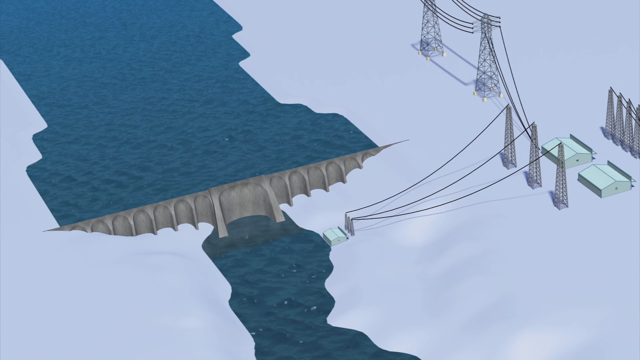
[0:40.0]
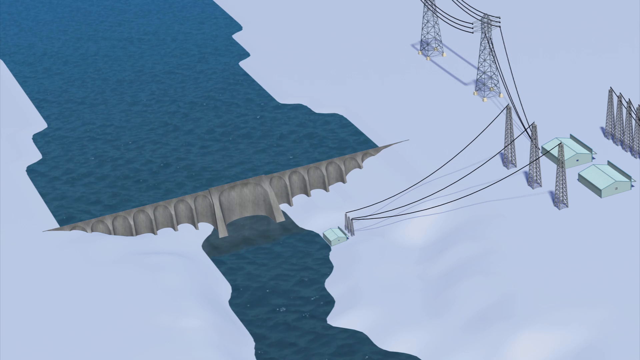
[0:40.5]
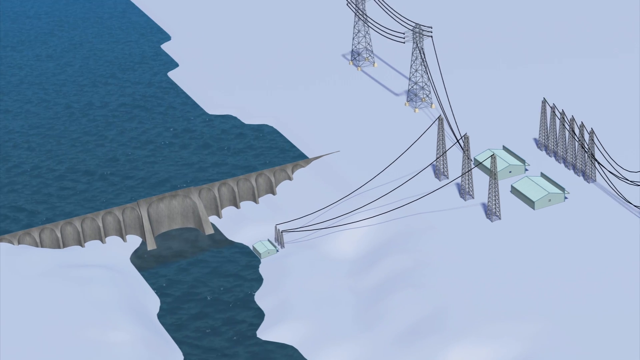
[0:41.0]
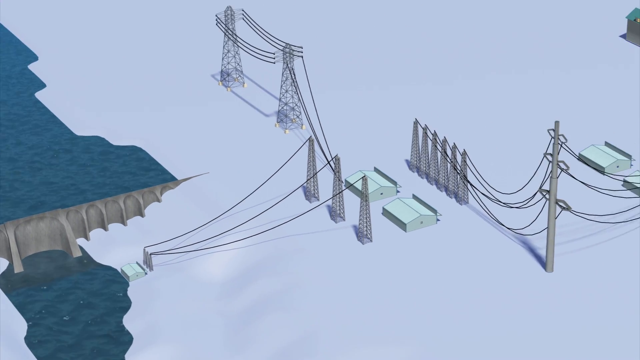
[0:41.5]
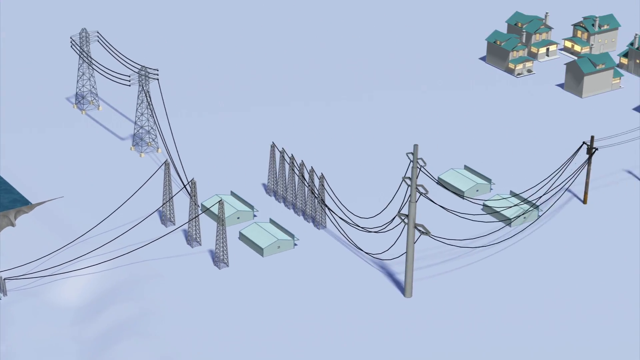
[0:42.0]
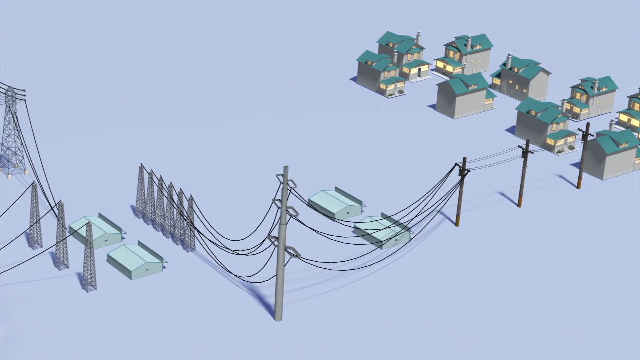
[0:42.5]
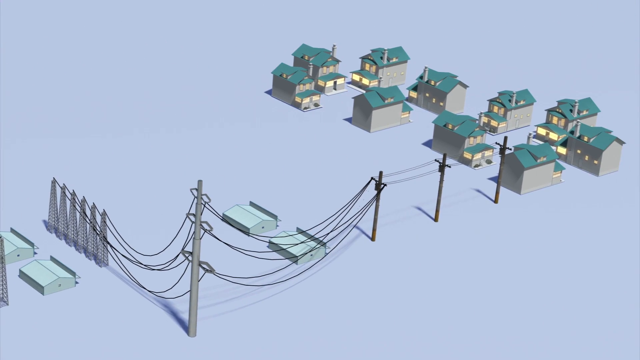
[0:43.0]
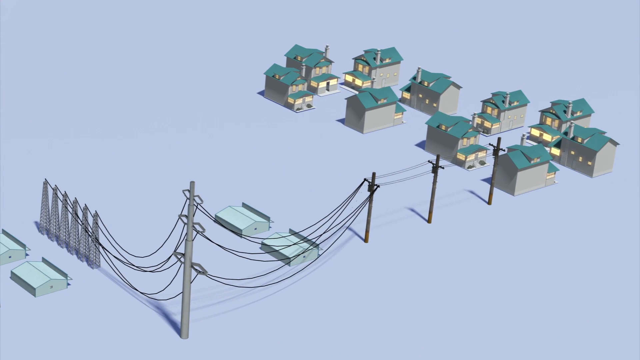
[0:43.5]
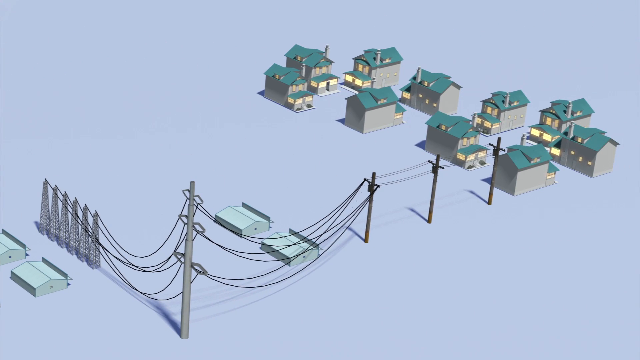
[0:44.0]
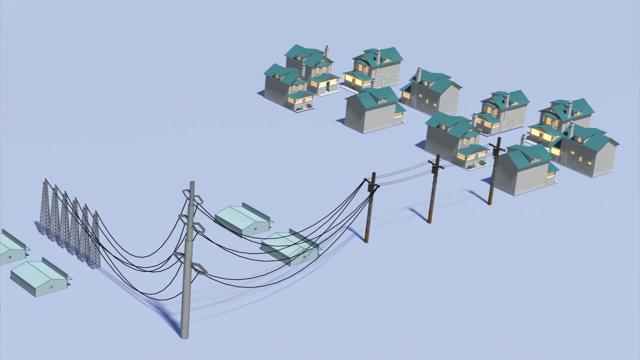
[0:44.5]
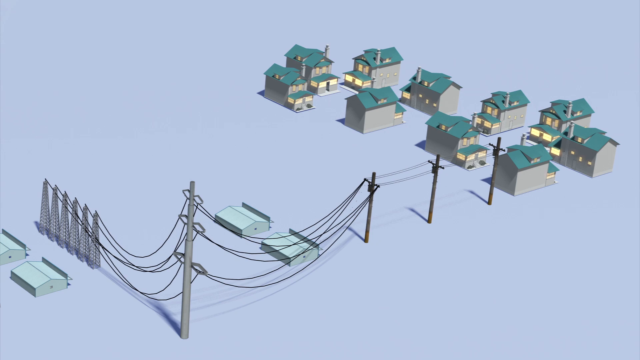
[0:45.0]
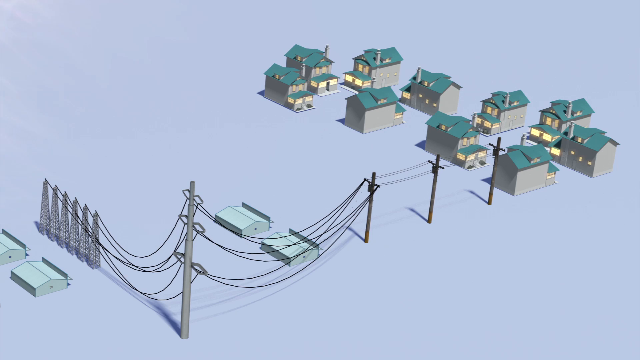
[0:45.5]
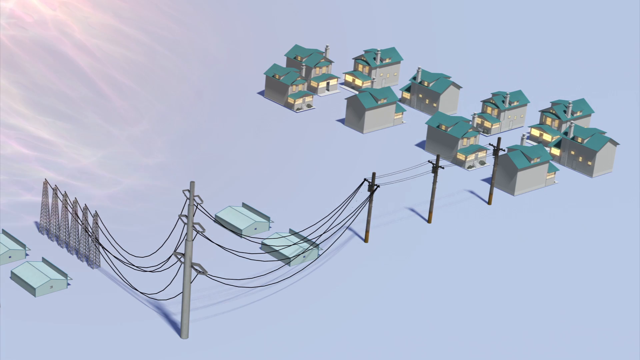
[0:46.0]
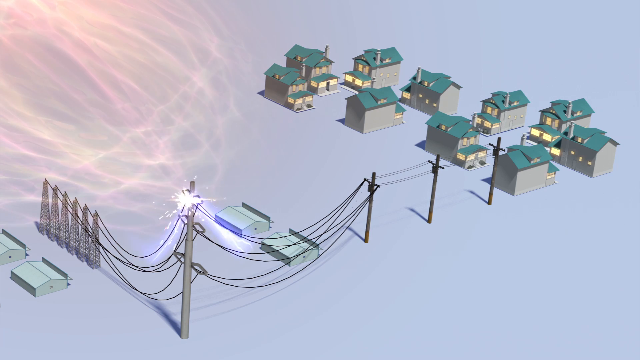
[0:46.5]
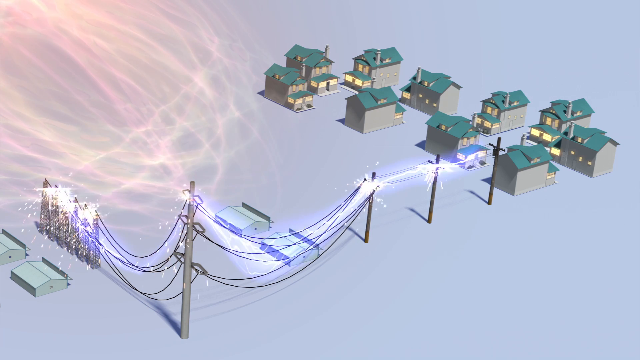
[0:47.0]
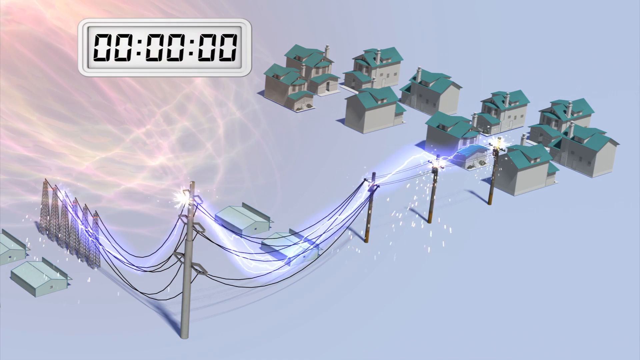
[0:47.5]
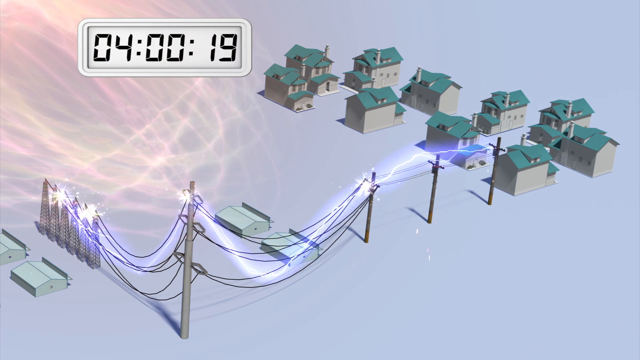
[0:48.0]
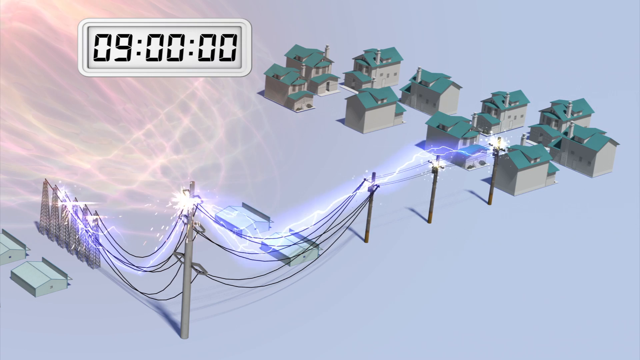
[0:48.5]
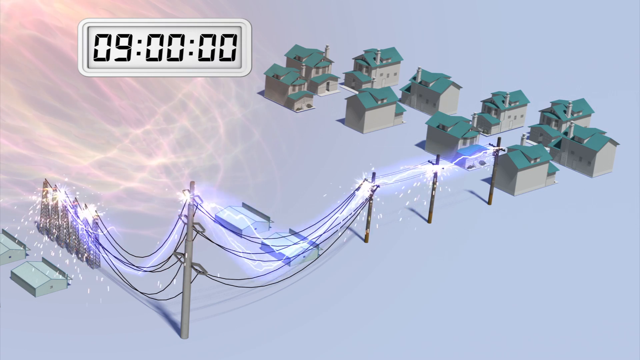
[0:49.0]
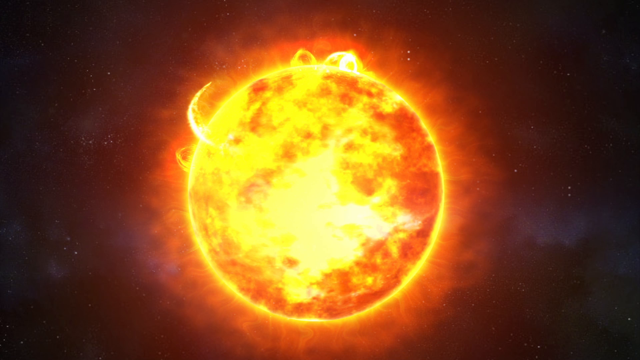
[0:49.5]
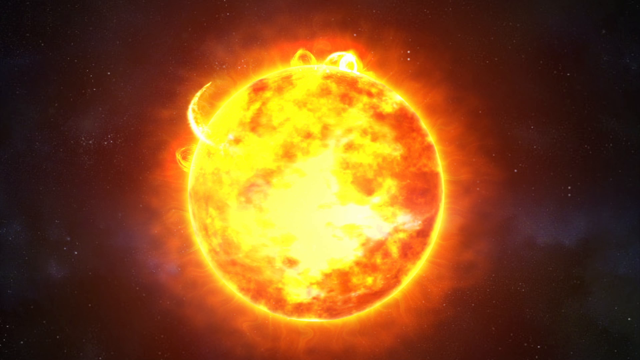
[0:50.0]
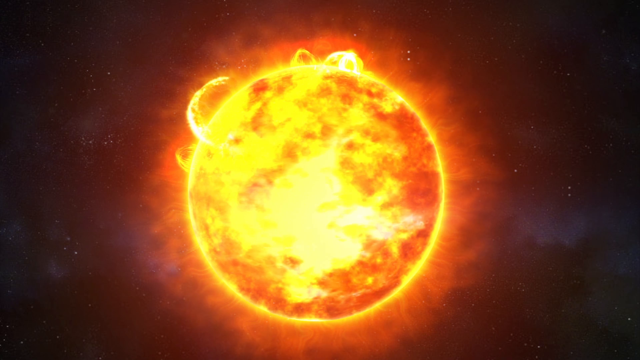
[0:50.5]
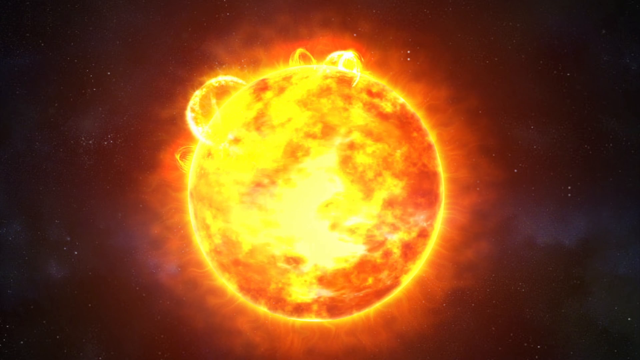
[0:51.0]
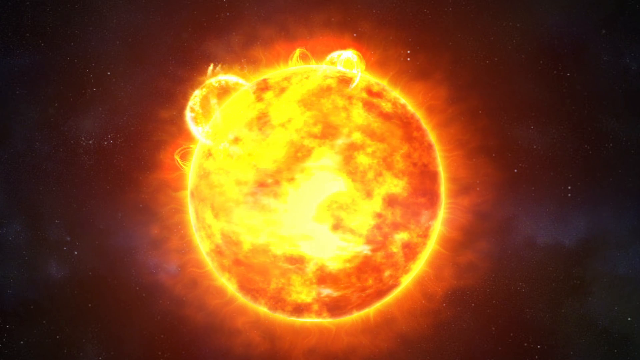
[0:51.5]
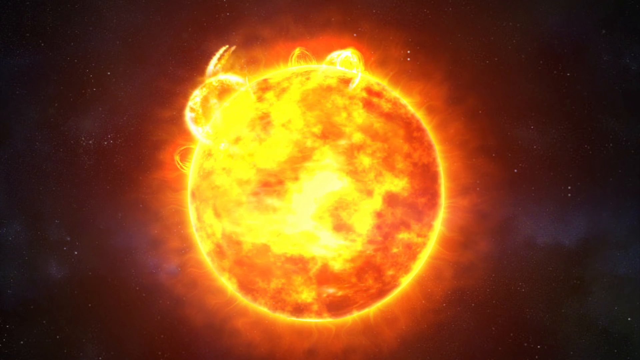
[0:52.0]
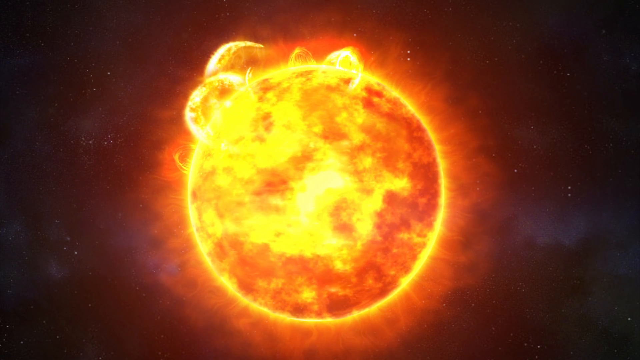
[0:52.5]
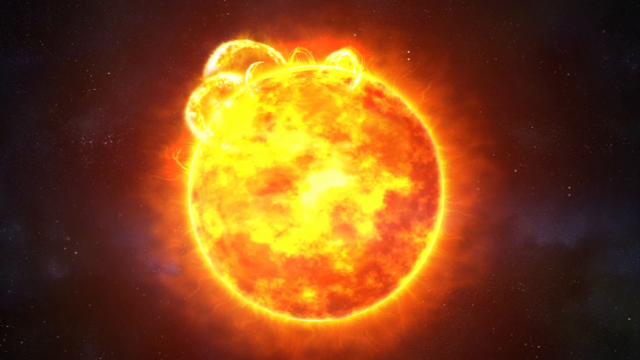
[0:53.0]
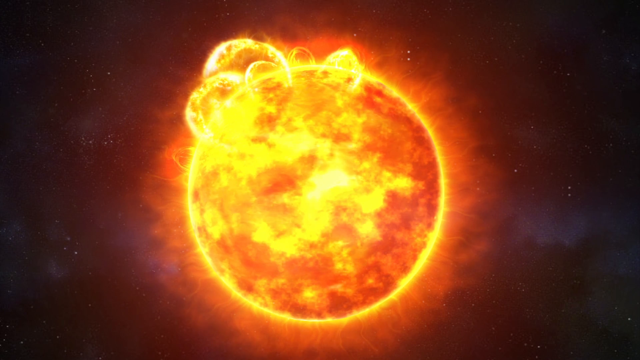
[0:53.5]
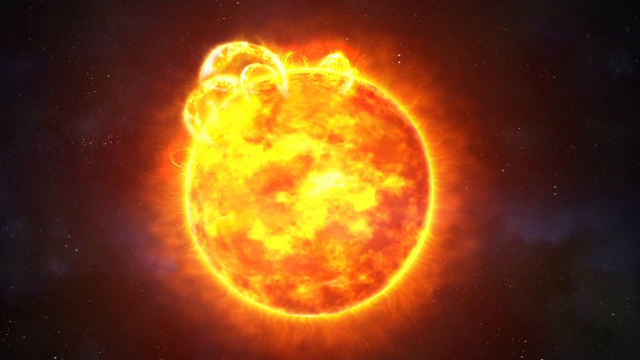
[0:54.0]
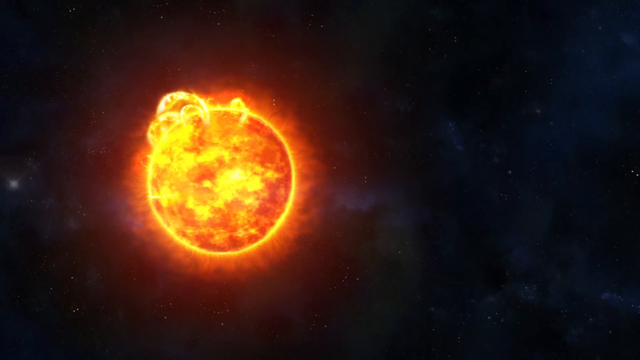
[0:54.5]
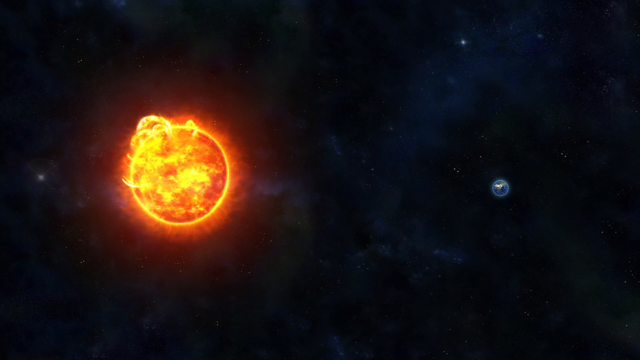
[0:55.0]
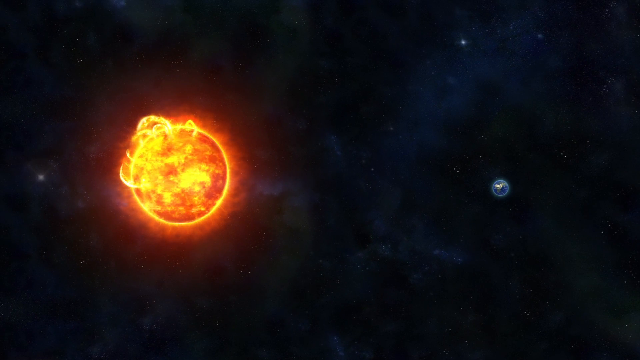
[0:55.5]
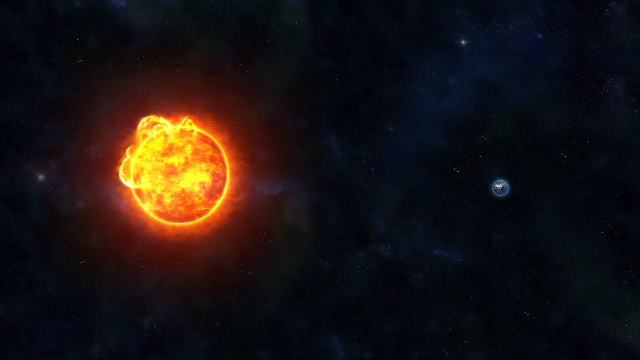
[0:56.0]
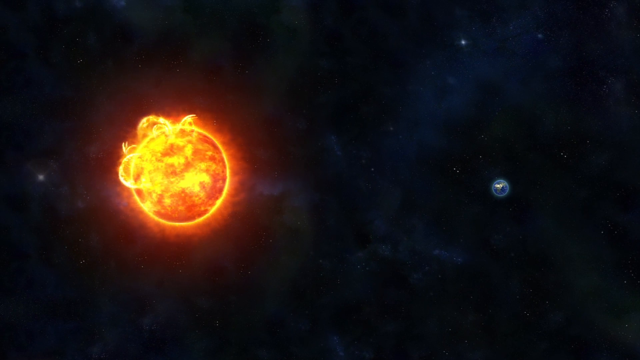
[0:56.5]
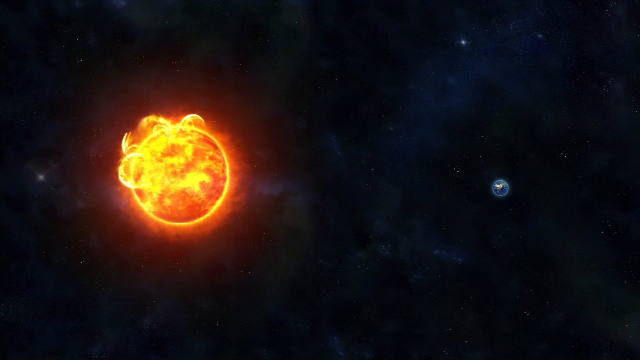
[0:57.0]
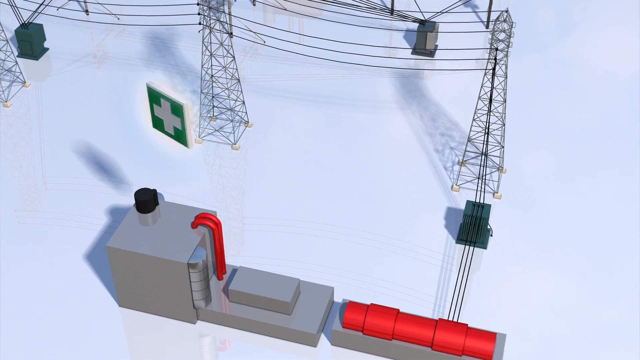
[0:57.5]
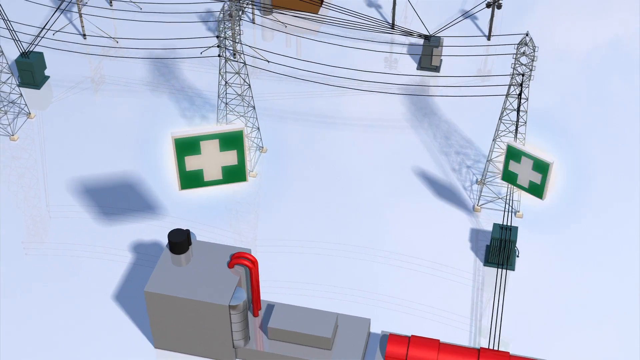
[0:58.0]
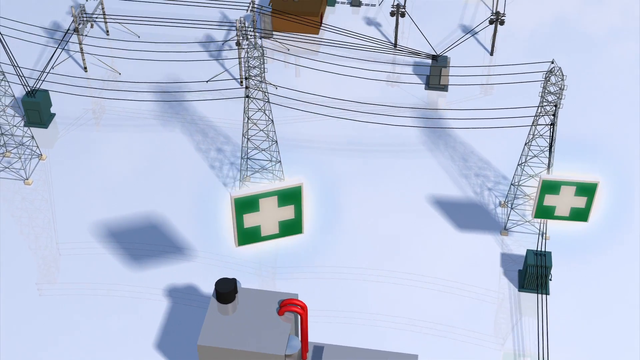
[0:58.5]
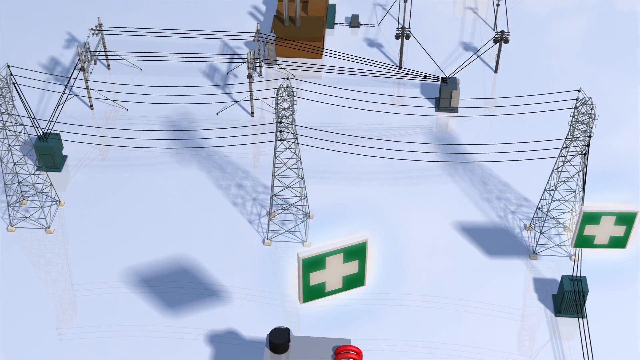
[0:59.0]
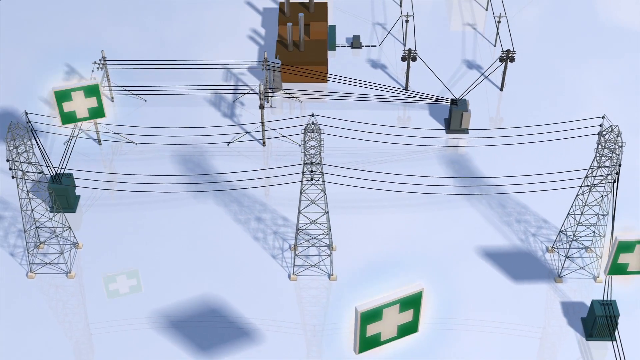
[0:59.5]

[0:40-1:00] An artistically drawn, kind of digitally produced telegraph writer taps out and sends a telegram. He apparently gets a shock and suddenly looks at his hand, possibly because the electricity is out. Electrical lines lead to some barracks out in the snow; something like lightning suddenly strikes them, and all the lights in the houses go out. The scene cuts to the sun with solar flares shooting off of it. Above some of the buildings where the electricity went out, green boxes with a white plus sign in the middle pop up, about three or four of them, and they suddenly turn around as something like a lightning bolt runs all the way through the electrical lines. A digital clock is in the upper left-hand corner of that section.